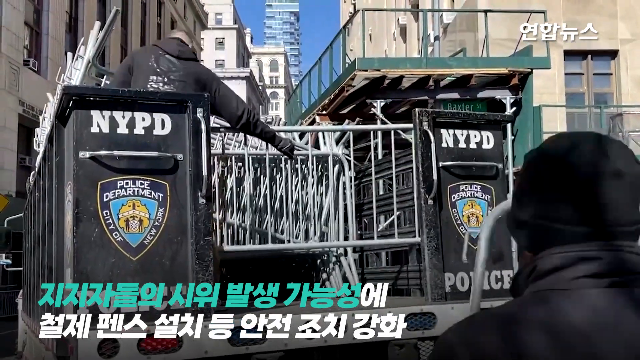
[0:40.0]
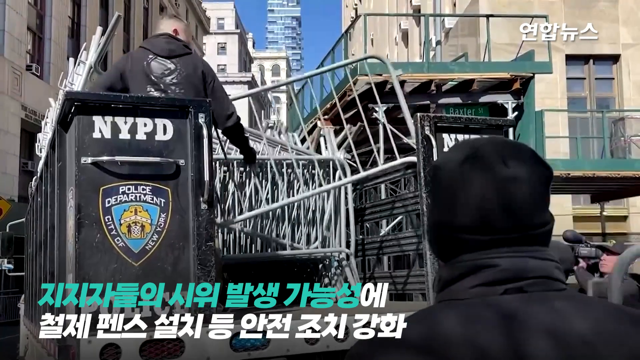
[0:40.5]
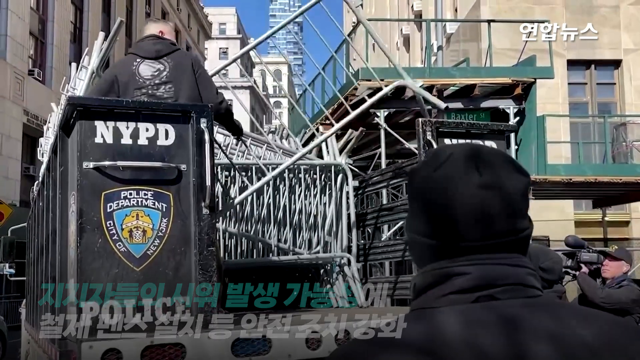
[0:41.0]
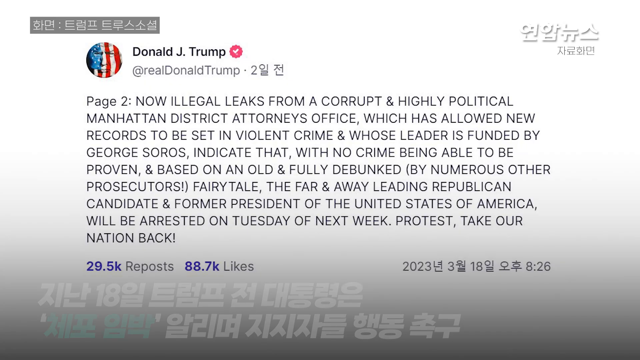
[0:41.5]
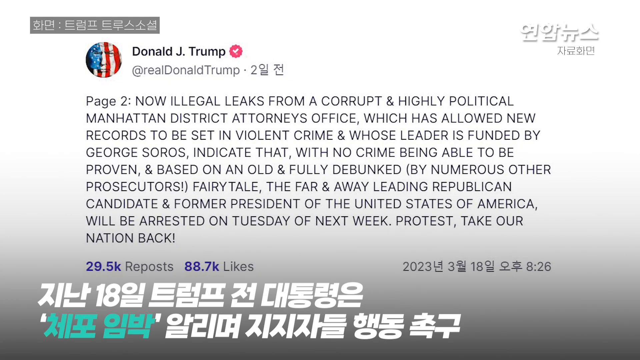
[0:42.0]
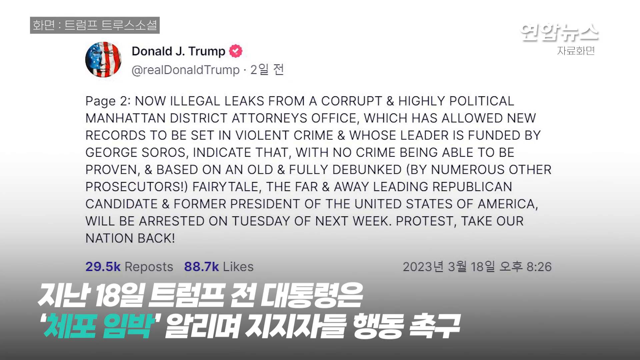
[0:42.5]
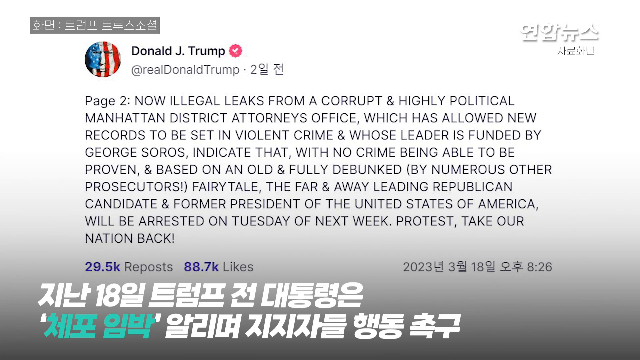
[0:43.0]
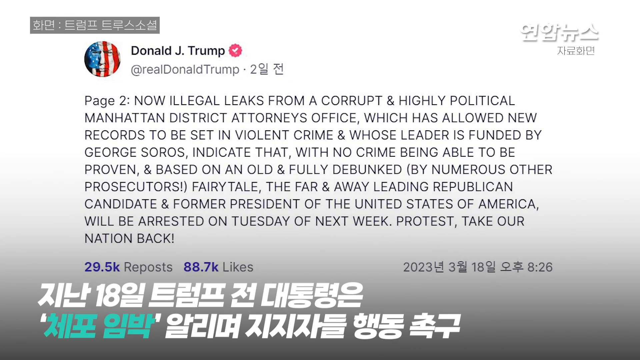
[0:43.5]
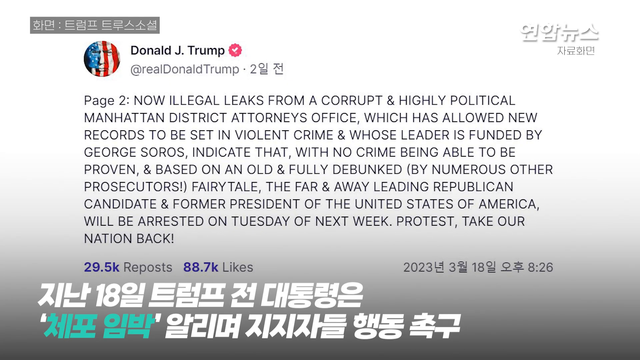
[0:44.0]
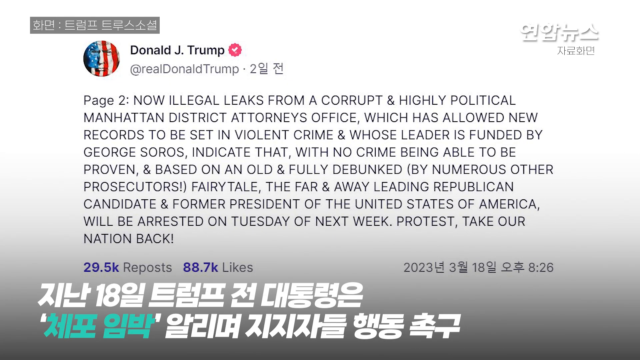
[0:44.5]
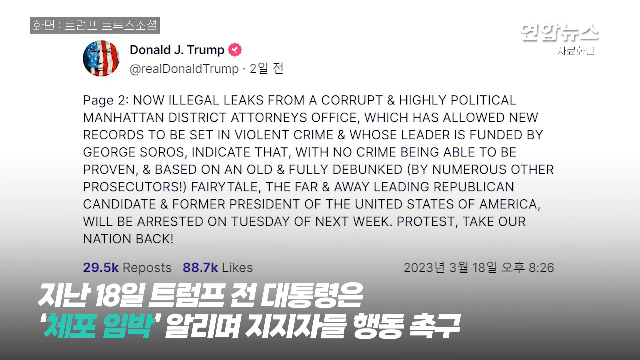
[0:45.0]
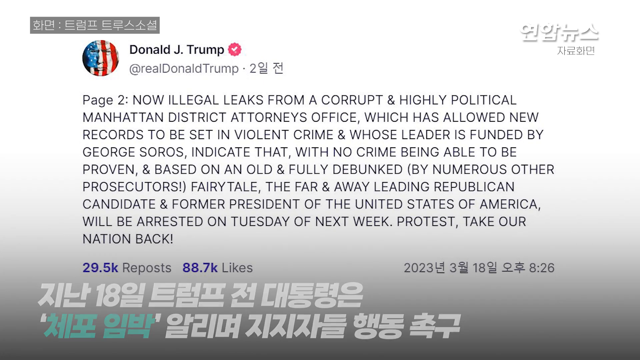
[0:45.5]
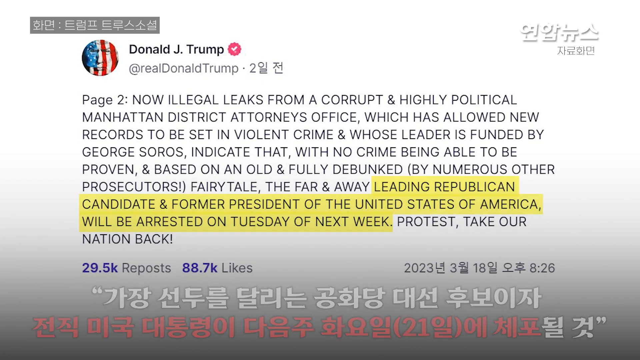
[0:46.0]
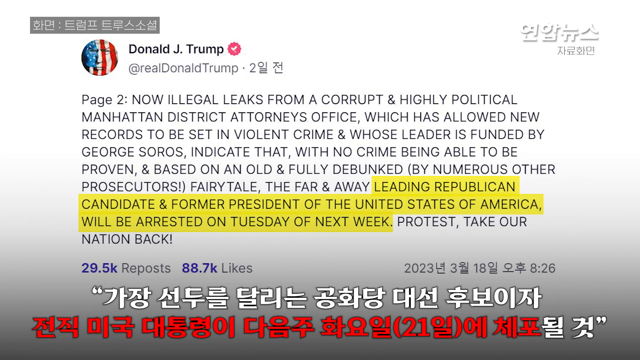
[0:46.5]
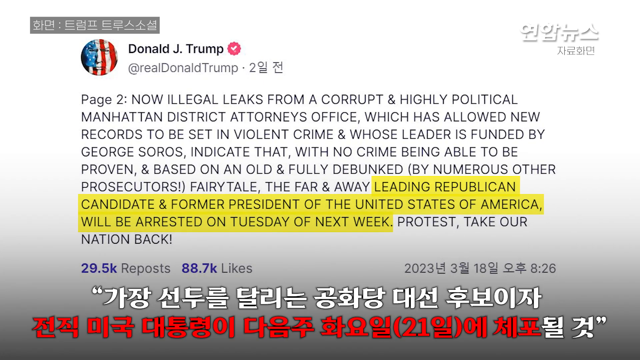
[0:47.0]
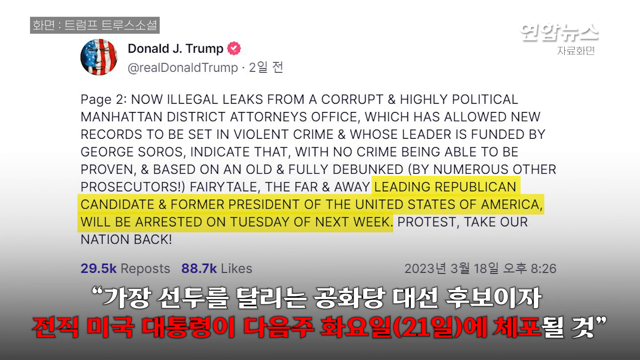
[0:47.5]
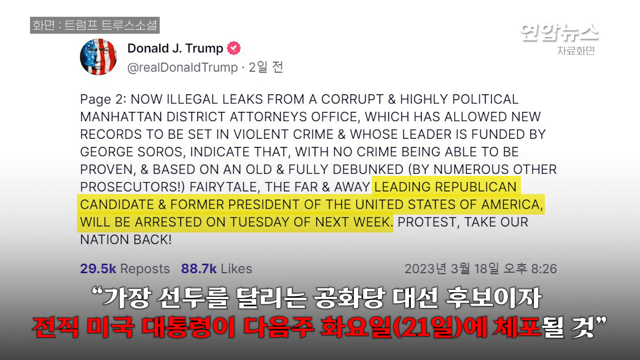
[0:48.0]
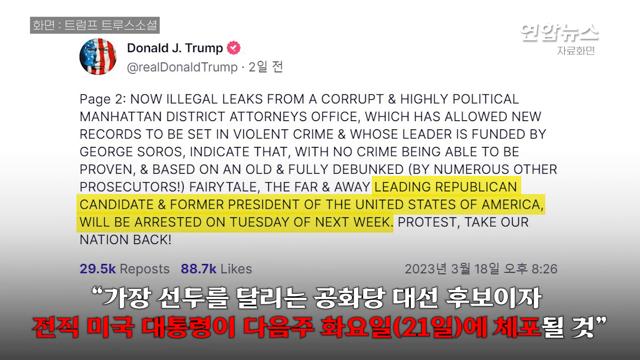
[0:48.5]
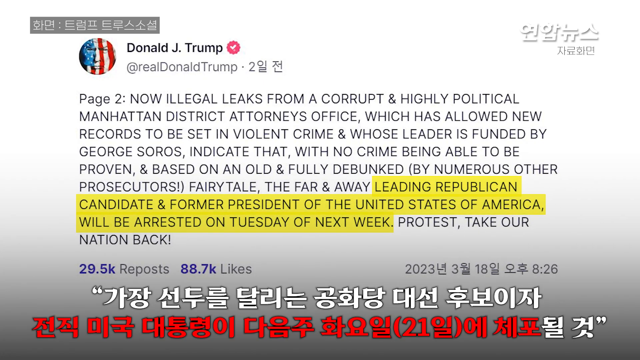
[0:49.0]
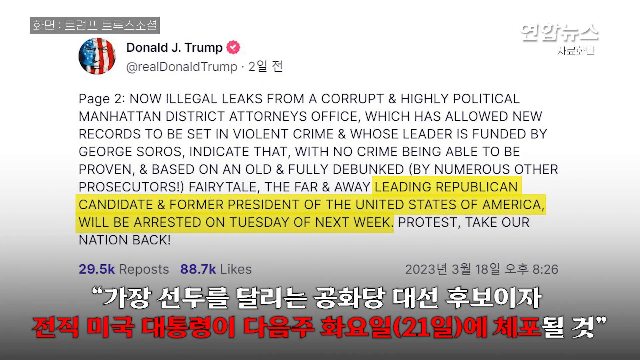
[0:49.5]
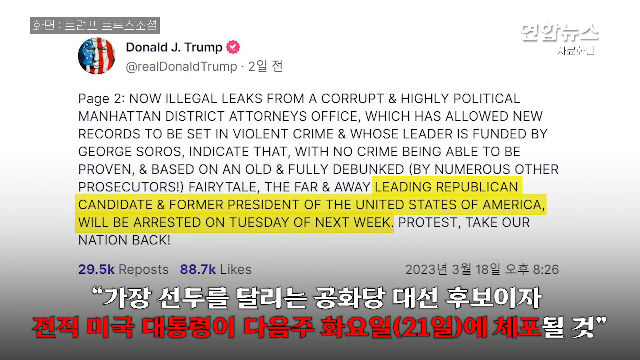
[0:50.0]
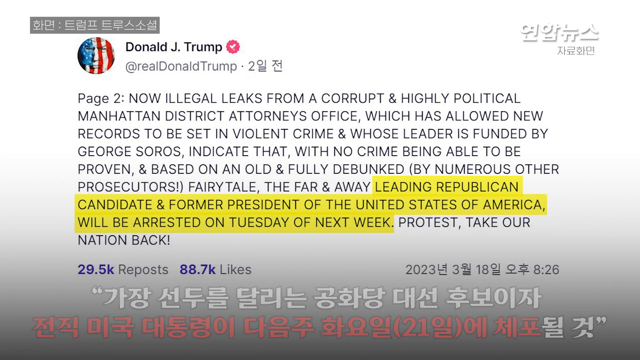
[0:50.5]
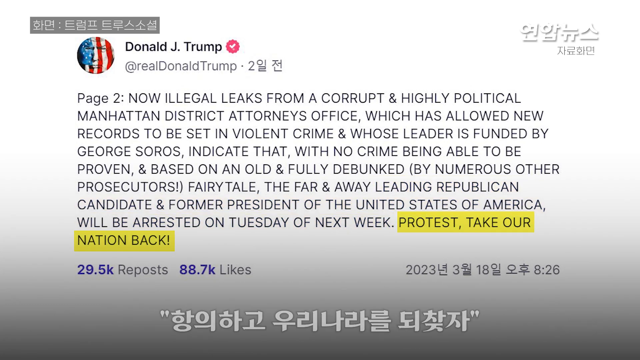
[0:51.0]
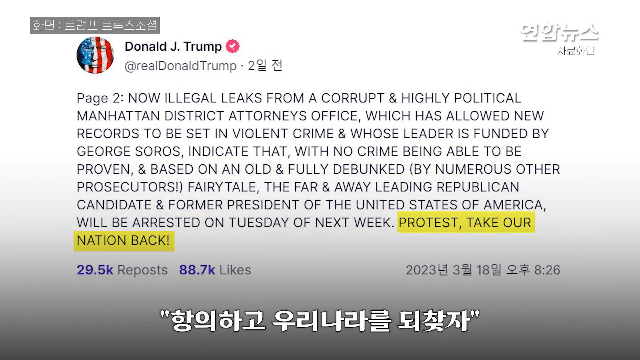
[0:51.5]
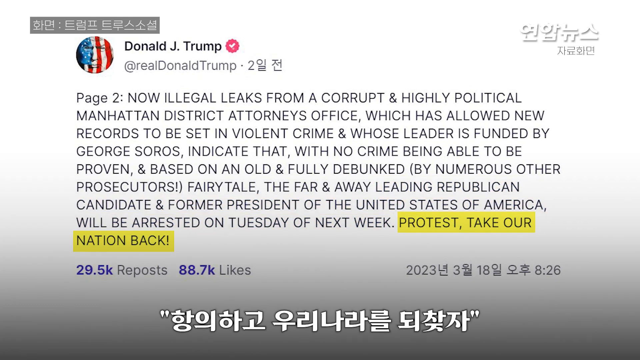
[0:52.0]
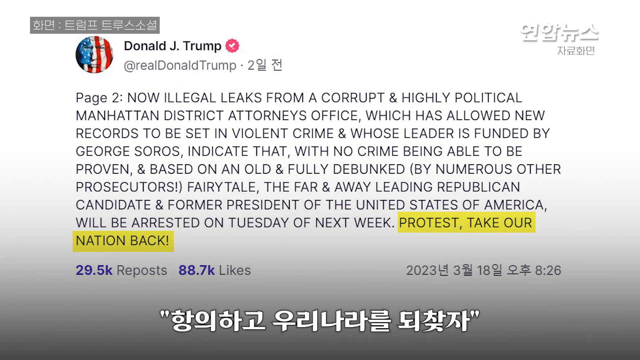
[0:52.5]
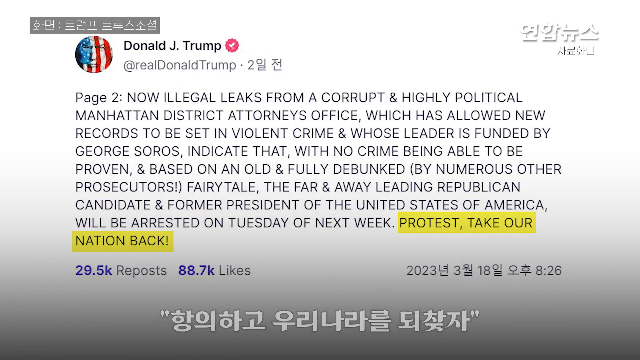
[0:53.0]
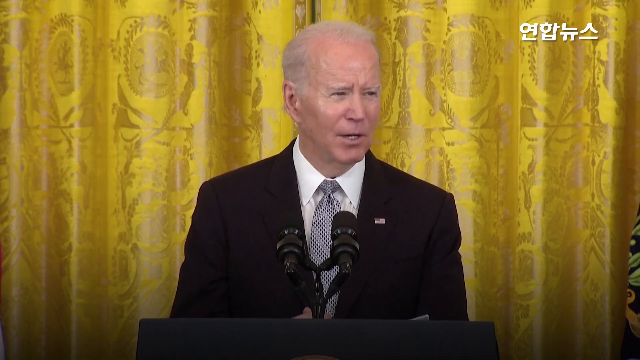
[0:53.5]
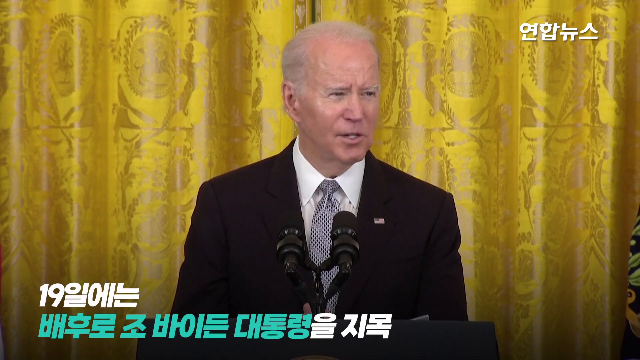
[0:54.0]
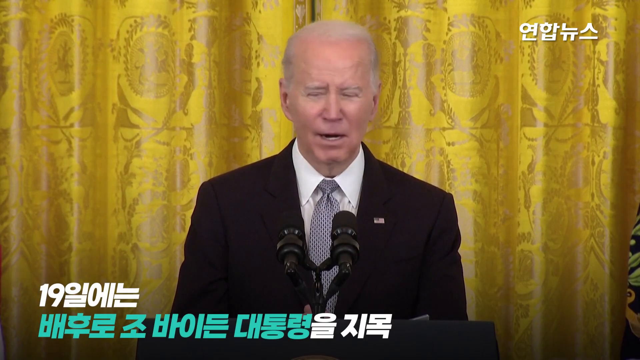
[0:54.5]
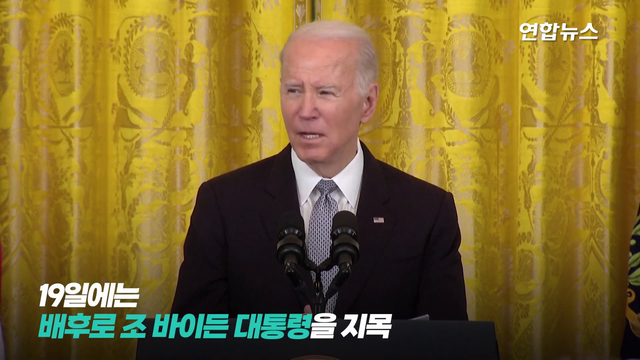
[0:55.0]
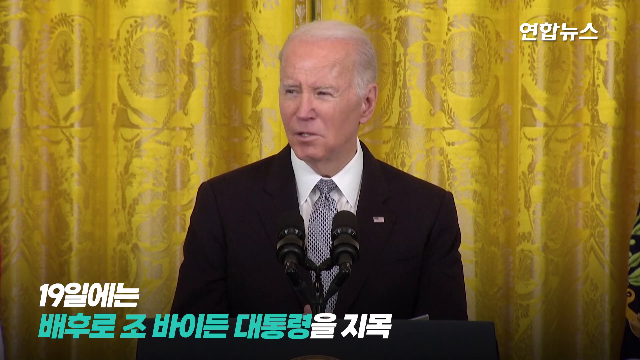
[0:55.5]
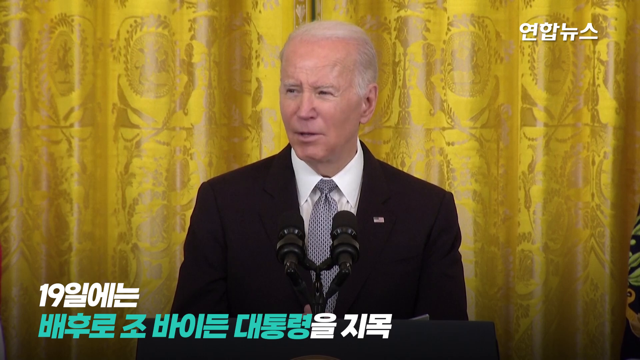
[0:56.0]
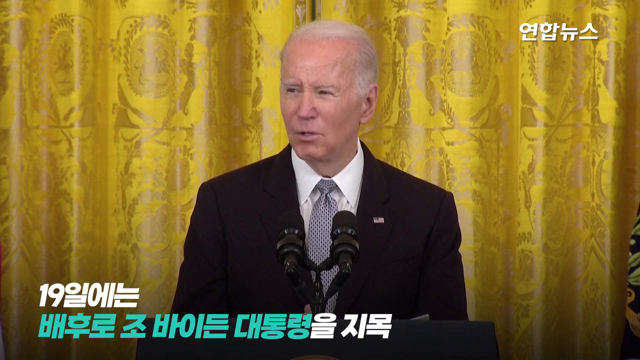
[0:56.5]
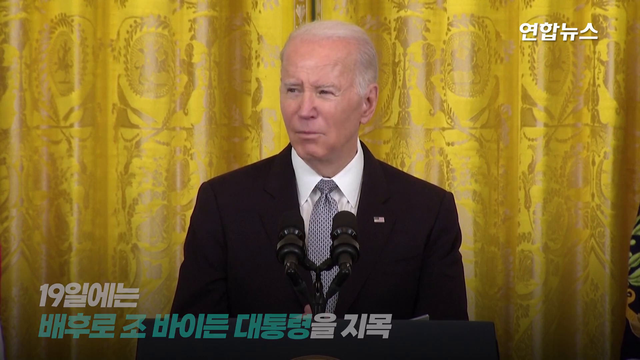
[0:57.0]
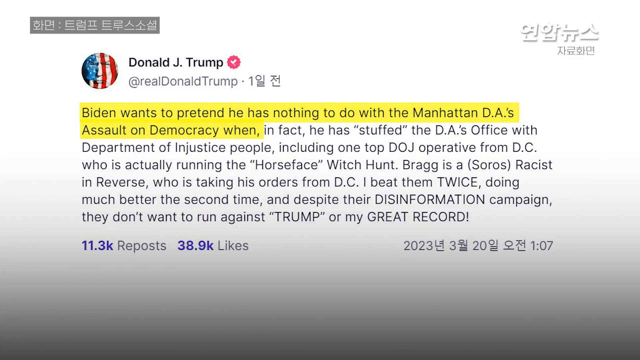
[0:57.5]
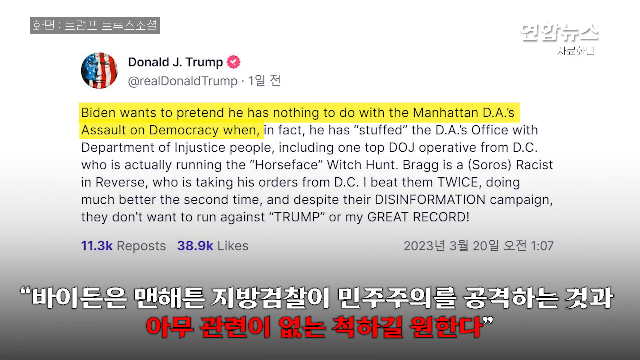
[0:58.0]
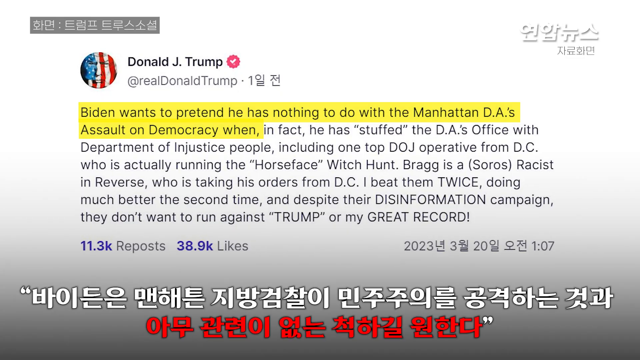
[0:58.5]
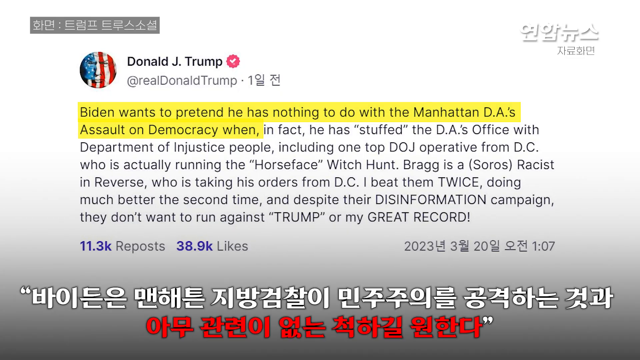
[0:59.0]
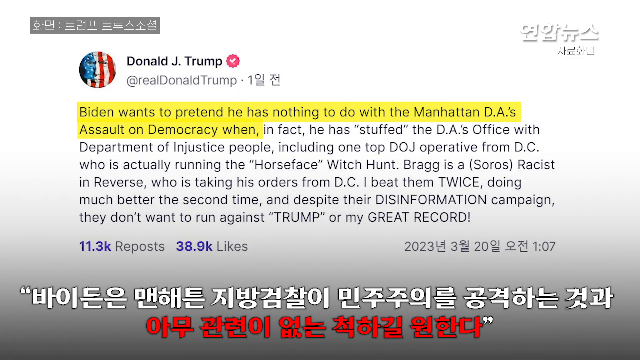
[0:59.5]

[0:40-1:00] The news story focuses on Manhattan and on a post from Donald J. Trump: "now illegal leaks from a corrupt and highly political Manhattan district attorney's office, which has allowed new records to be set in violent crime and whose leader is funded by George Soros, indicate that with no crime being able to be proven, and based on an old and fully debunked fairy tale, the far and away leading Republican candidate and former president of the United States will be arrested on Tuesday of next week, protests take our nation back." The words "the leading Republican candidate and former president of the United States will be arrested on Tuesday of next" are then emphasized. An image of Joe Biden appears with a tweet reading: "Biden wants to pretend he has nothing to do with the Manhattan DA's assault on democracy, when in fact he has stuffed the DA's office with Department of Injustice people, including one top DOJ operative from D.C. who is actually running the horse face witch hunt, Bragg is a Soros racist in reverse."